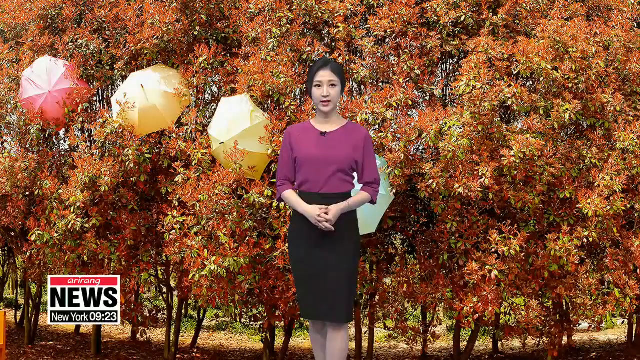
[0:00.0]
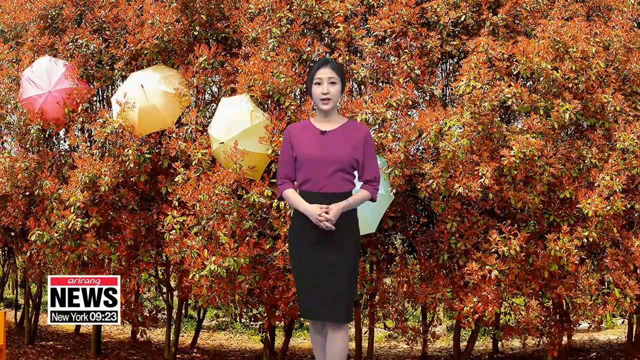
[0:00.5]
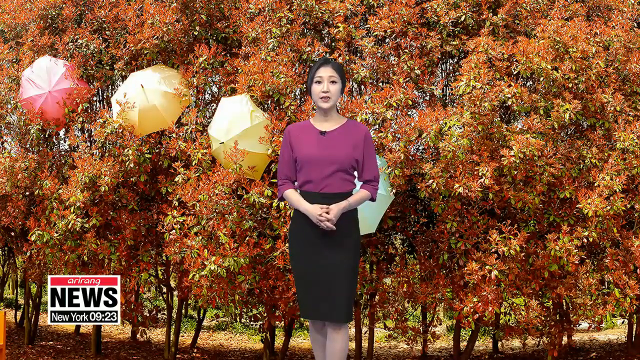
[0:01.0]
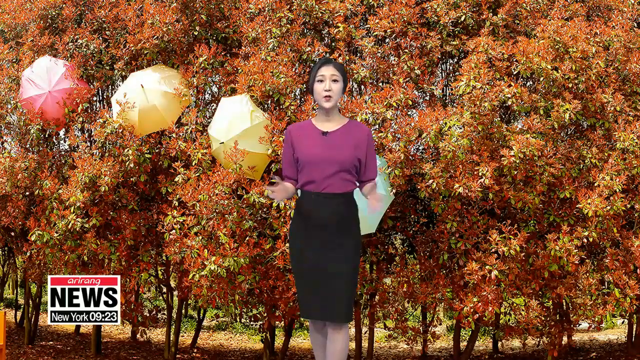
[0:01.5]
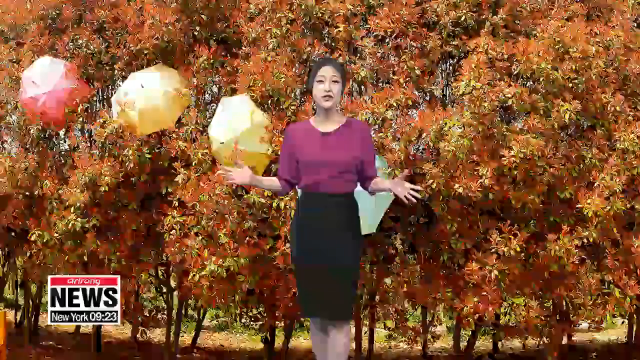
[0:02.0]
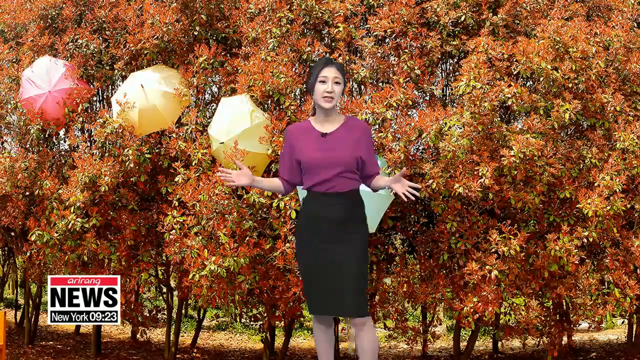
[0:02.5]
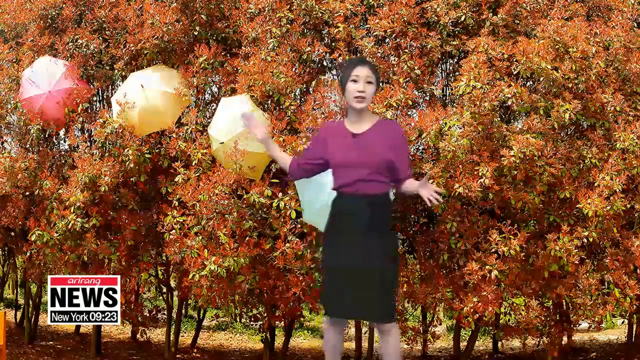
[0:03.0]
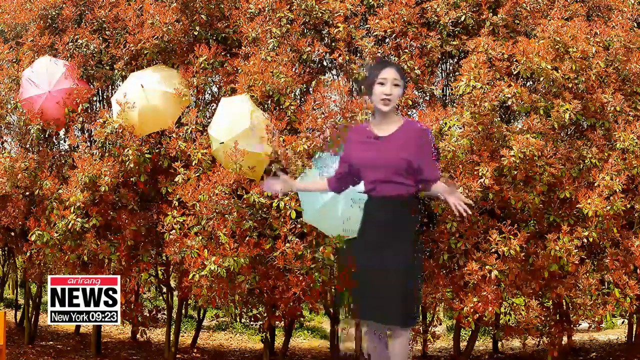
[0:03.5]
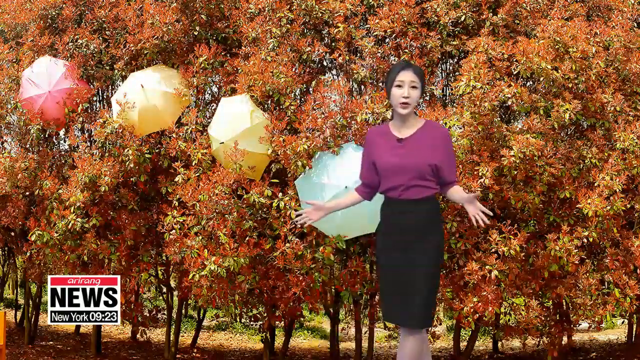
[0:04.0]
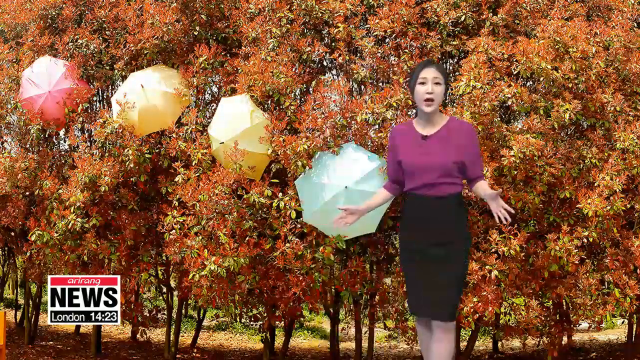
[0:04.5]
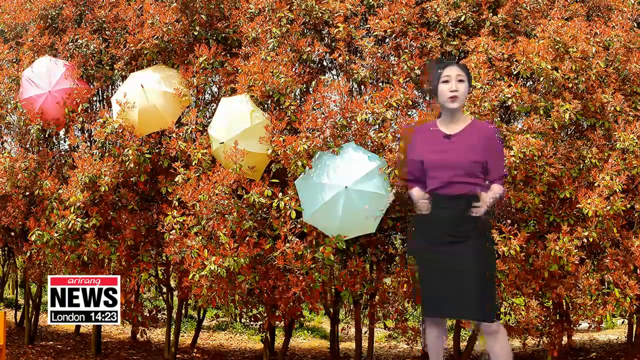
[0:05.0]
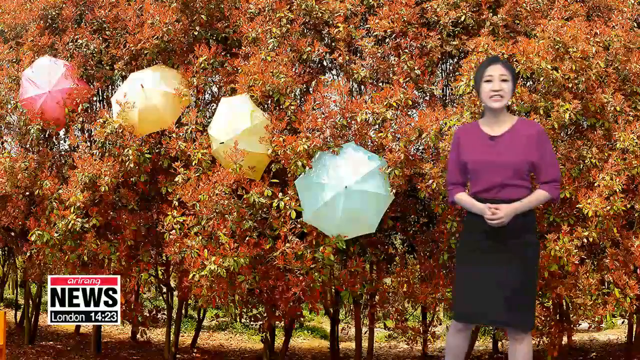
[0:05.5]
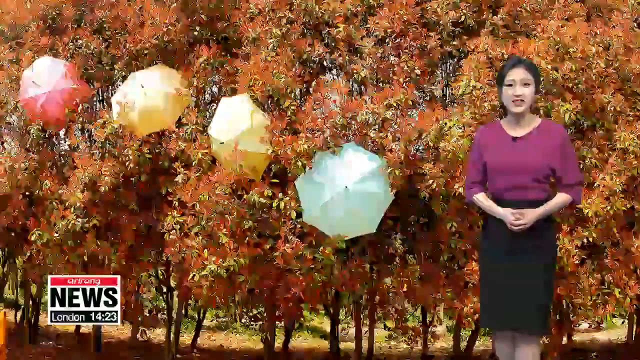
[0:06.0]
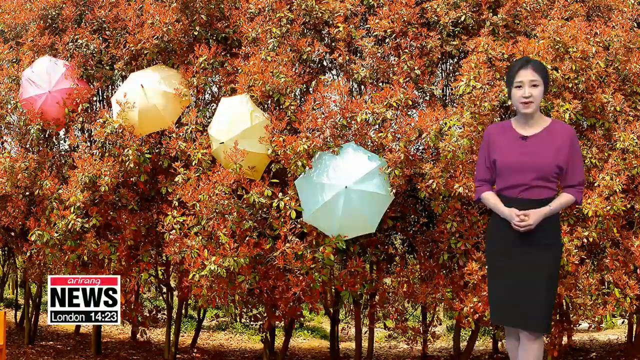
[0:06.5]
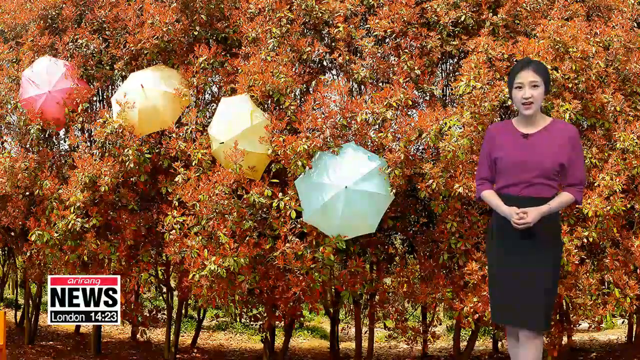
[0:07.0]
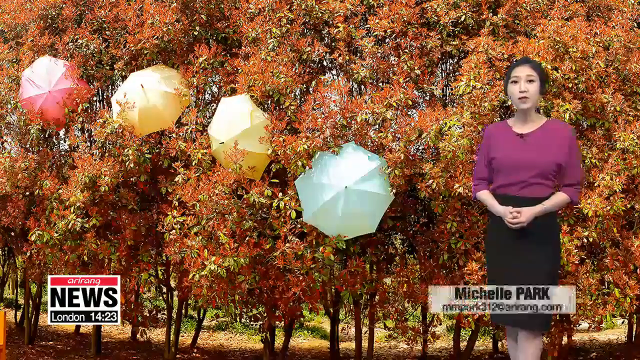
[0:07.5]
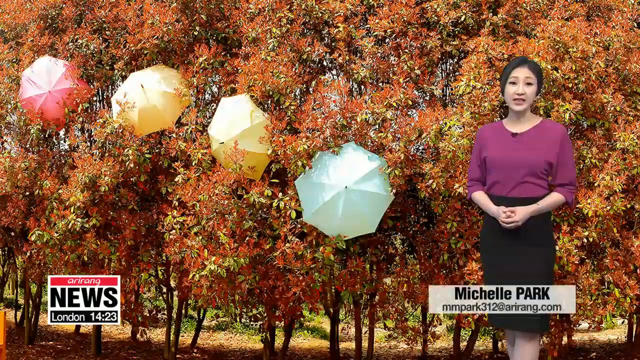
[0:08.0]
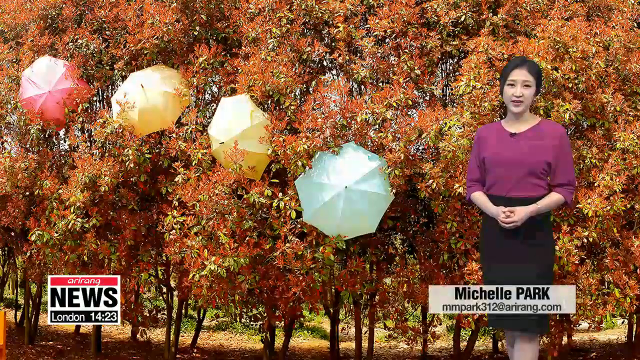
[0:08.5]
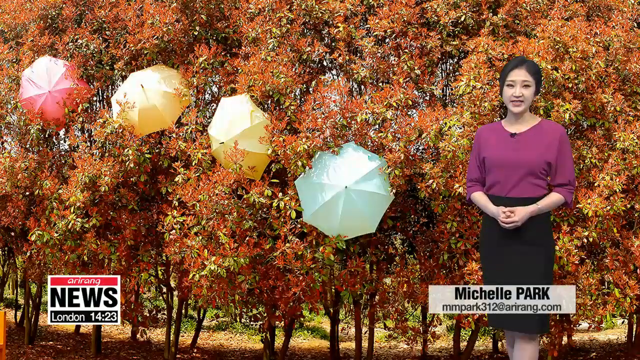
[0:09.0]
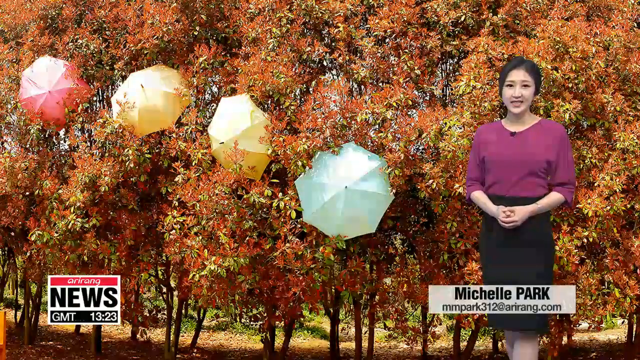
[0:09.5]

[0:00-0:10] An Asian woman stands in front of a backdrop that looks like autumn. A bunch of umbrellas stick through the thicket of trees: a red one, a couple of yellow ones and then green ones, almost in a row, kind of curving down. The red one starts a little more toward the top left, the yellow ones go across, and then the row goes down, all of it behind her. She seems to be speaking and is standing off to the side. Her name, Michelle Park, is shown, with a website underneath it. She wears a black dress with a kind of magenta top, is kind of holding her hands together, and has a bracelet on her left arm. In the bottom left area is the text "airing news, new york 0923"; the first word is in white on a red banner, "news" is very large, and "new york" is in reverse print.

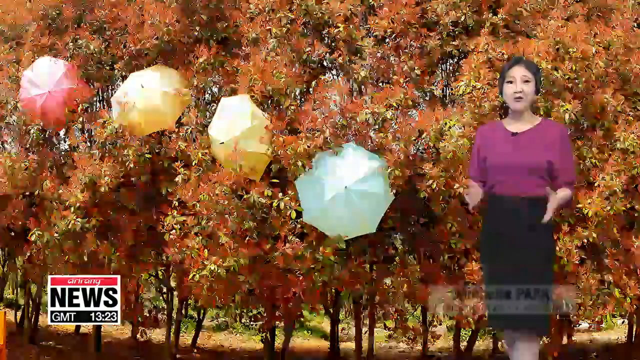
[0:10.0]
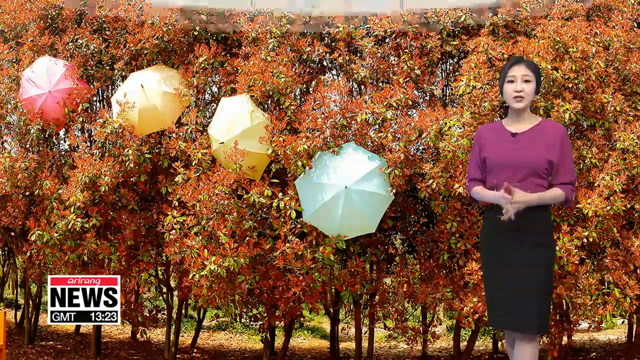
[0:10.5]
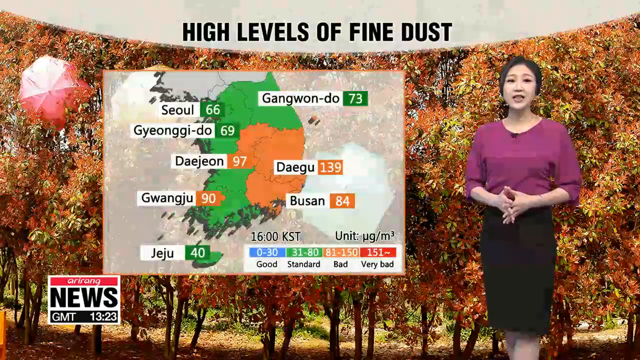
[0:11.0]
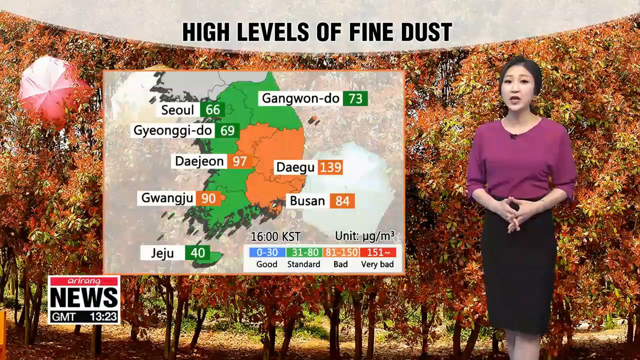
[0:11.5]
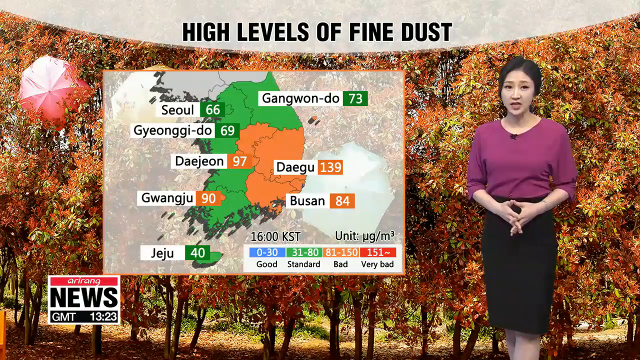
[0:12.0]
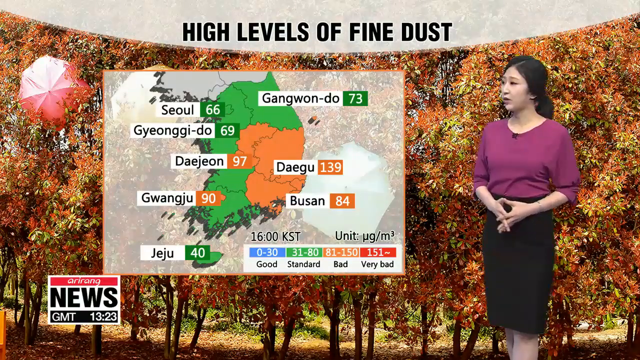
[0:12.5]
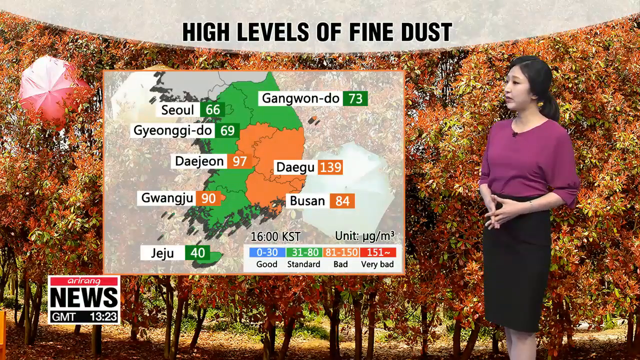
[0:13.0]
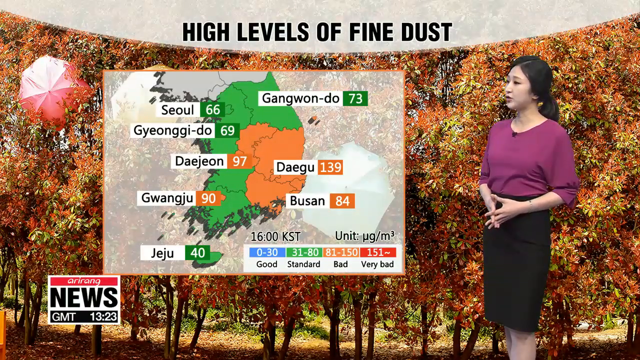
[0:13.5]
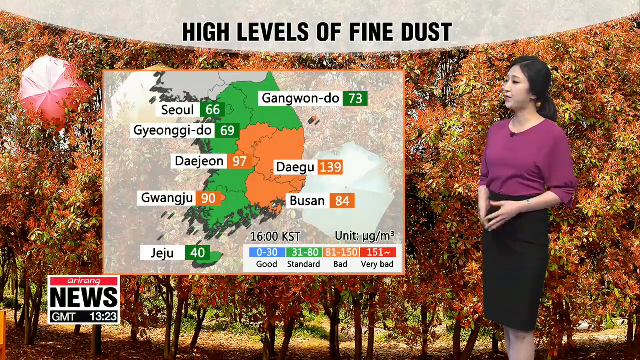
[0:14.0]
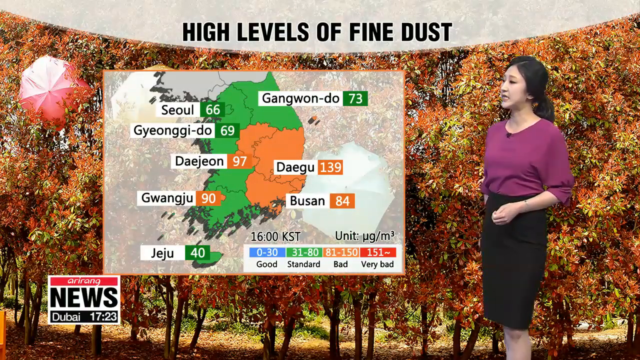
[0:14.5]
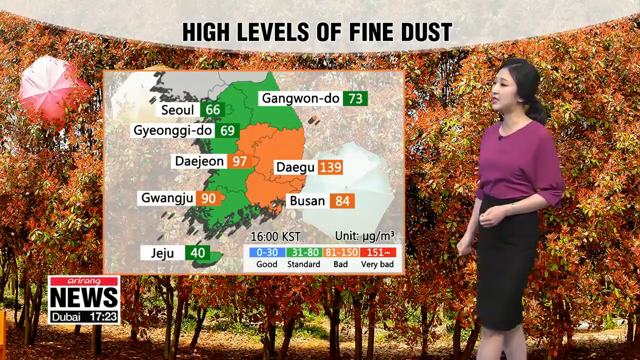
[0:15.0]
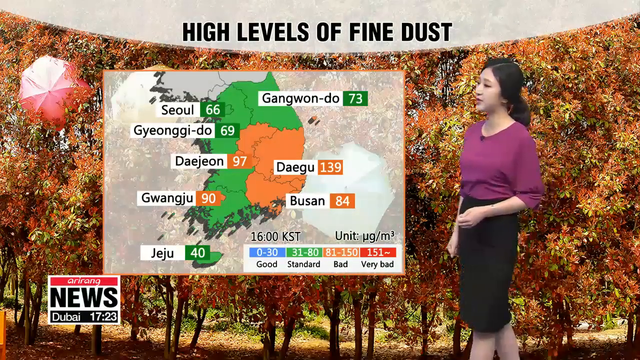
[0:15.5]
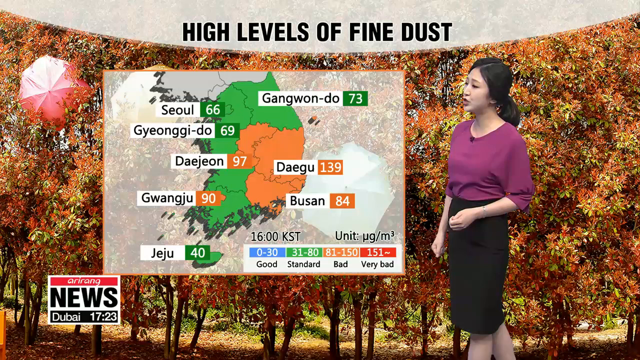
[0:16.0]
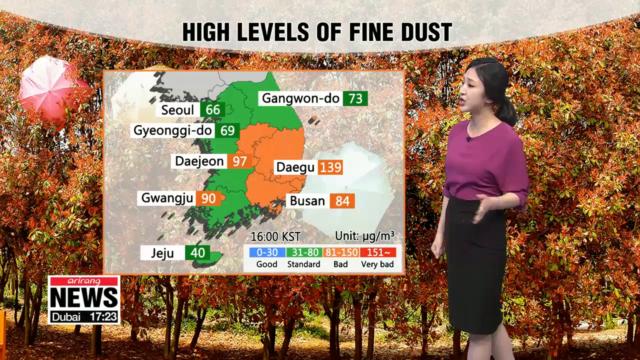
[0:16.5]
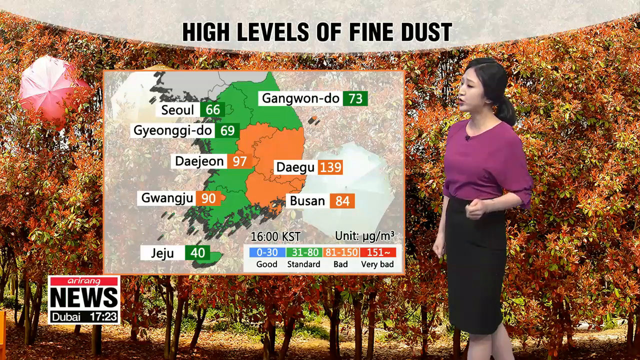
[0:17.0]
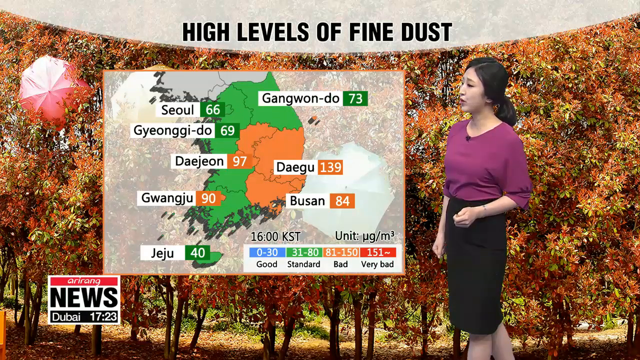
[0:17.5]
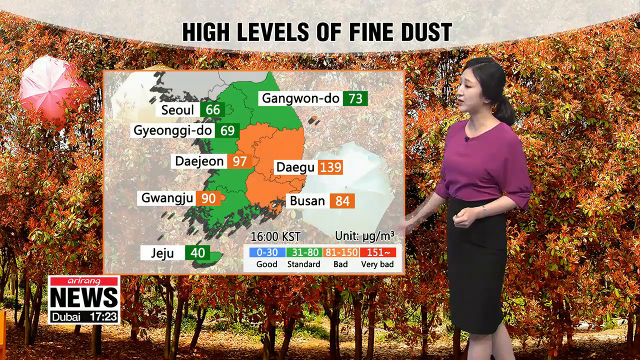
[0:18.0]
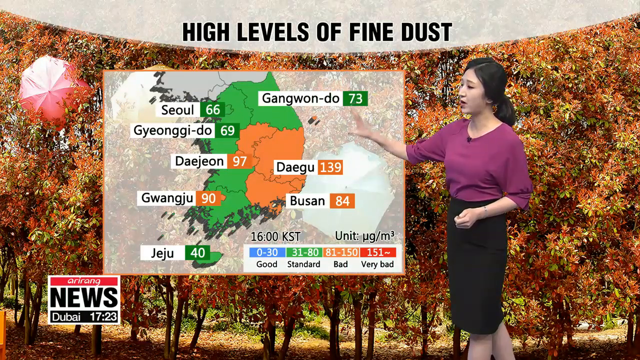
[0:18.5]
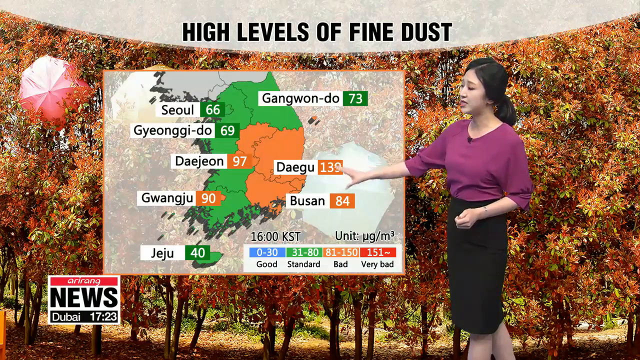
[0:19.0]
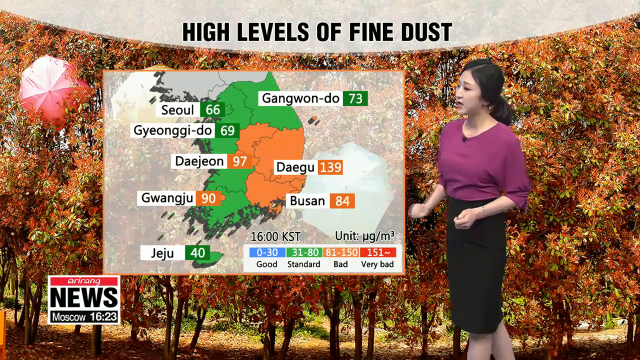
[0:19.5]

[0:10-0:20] The woman uses her hands a little, clasping them together and interlocking her fingers in front of her. A white arc comes down with the text "high levels of fine dust" in black caps, slightly below it and to the left, all over the backdrop of autumn leaves. A map shows areas in green and orange, apparently indicating dust particles. A legend at the bottom shows "Good" as 0 to 30 in blue, standard in green, bad in orange and very bad in red. The majority, in the central part, appears to be bad, and green is standard, kind of around Guangdu. Cities are shown as well: a city in the standard range appears in green with its amount of fine dust, and a city in the orange range has an orange box with its amount of fine dust. She turns and looks, walks over, and points to Guangdu and then Deagu, contrasting the two.